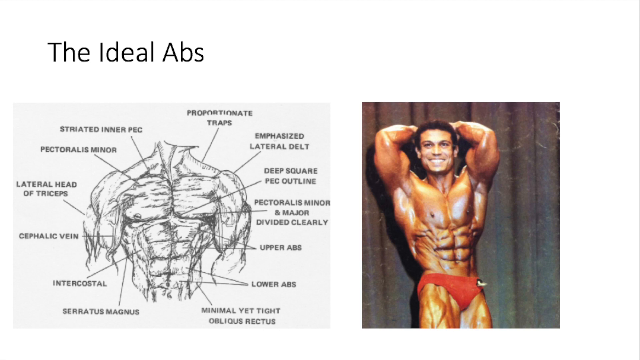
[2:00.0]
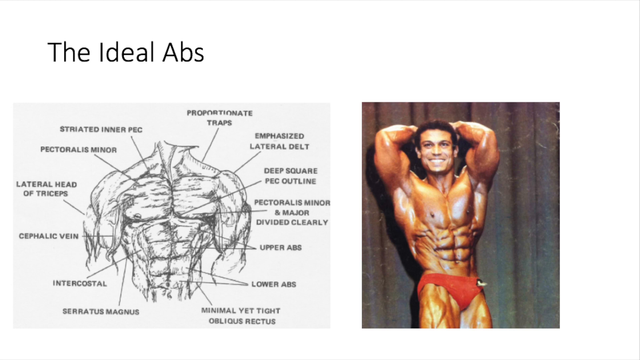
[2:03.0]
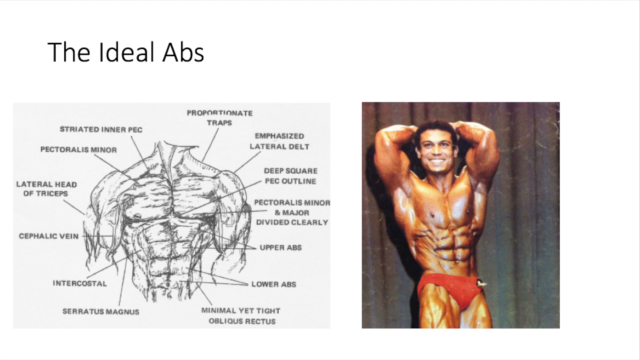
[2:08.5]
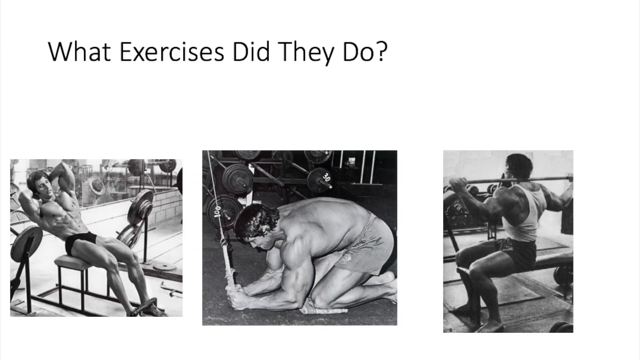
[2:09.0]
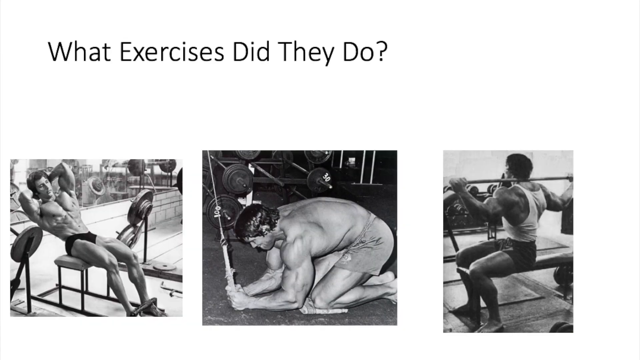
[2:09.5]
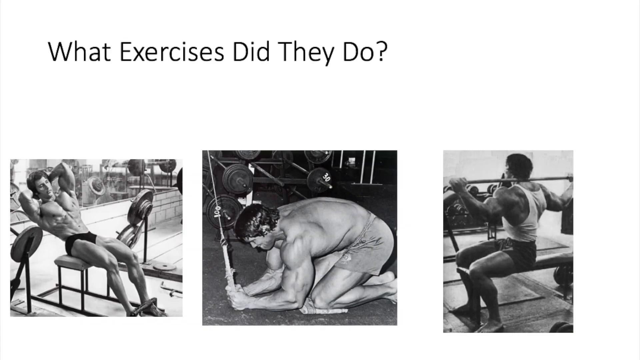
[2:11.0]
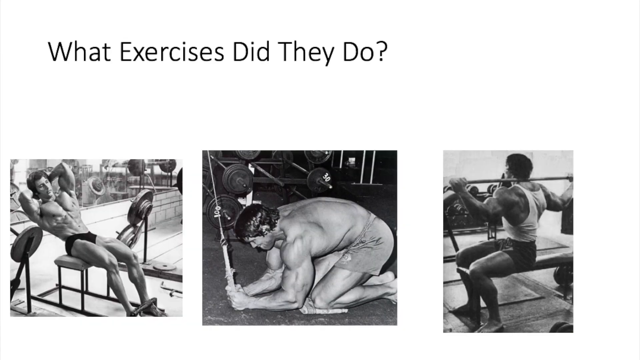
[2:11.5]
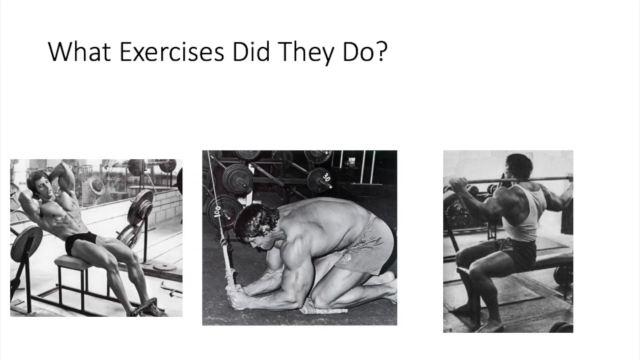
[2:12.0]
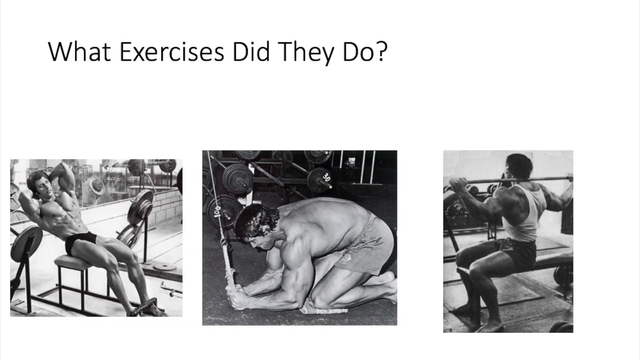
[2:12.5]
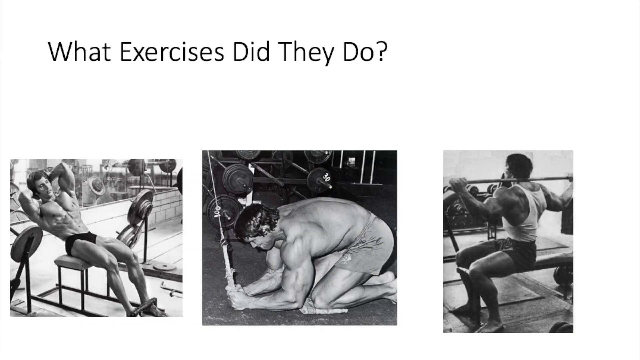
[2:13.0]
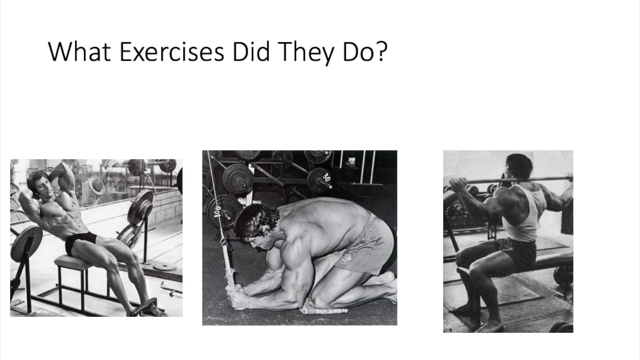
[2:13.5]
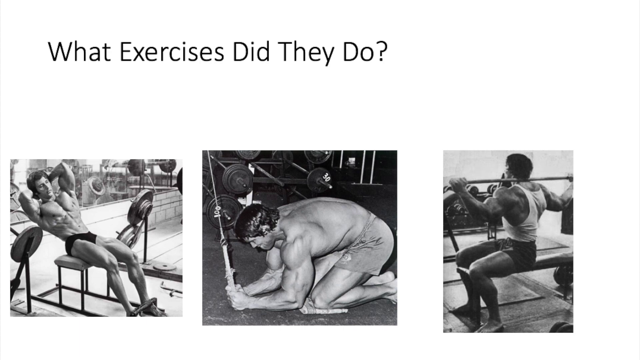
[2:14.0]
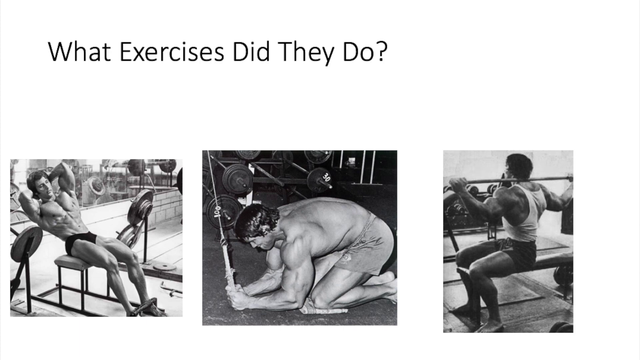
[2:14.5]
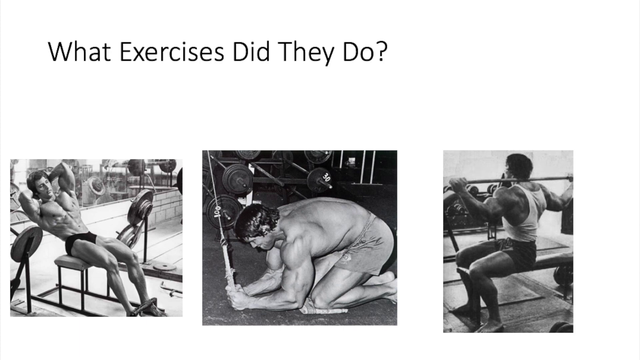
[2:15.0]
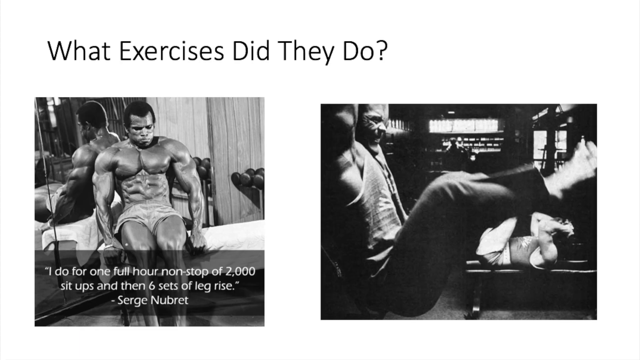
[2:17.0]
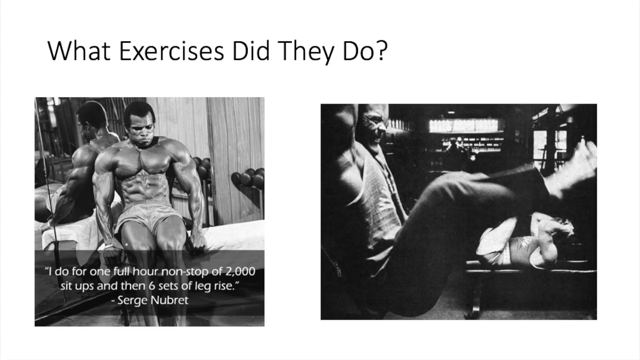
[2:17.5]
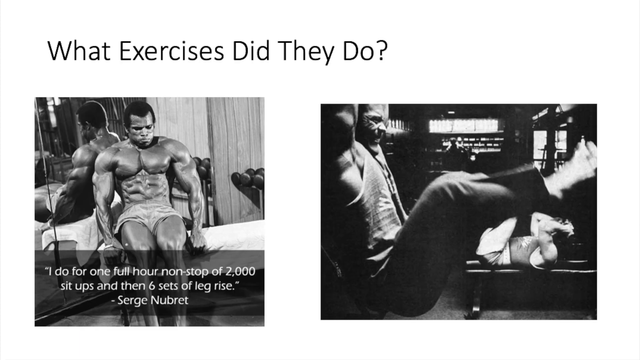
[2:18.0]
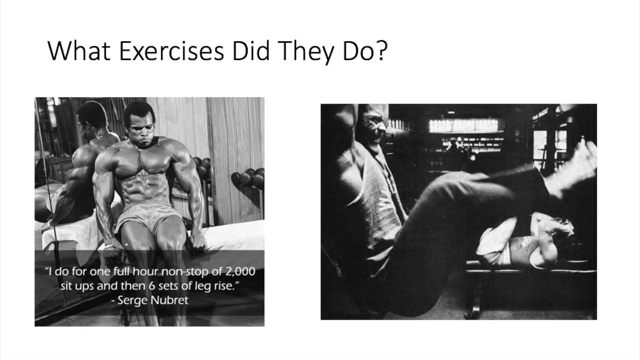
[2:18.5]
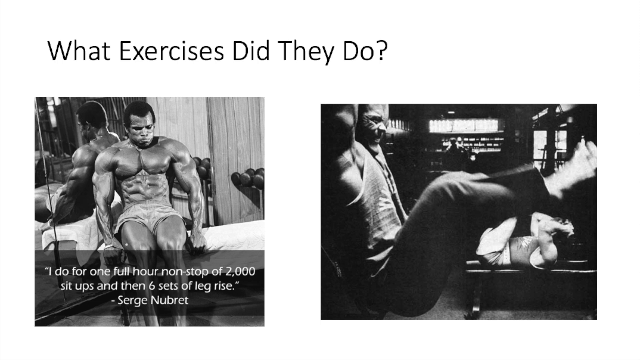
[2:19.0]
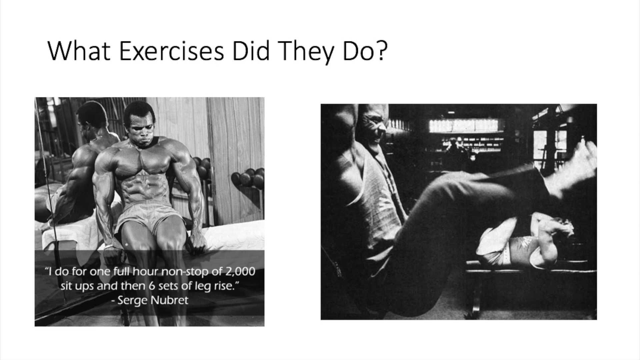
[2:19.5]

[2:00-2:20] The frame is a little wider than it is tall. Black text at the top reads "the ideal abs". In the lower left, a picture extending about halfway across shows something like a pencil sketch of a man's torso with the different muscle groups labeled from the shoulders down to the lower abs. On the right, a heavily tanned man in red trunks poses with his hands behind his head and his elbows up at head level, a pose that shows off the abs; he smiles and faces generally toward the camera. The next slide has black text at the top reading "what exercises did they do". In the lower left, a man in black trunks is on the edge of a bench, leaning back with his hands behind his head, as if descending into or coming up from some sort of crunch. In the middle is Arnold, who looks like he is doing a cable crunch: facing left at a cable machine with the cable between his hands, crunching down. On the right, a black man twists toward the right with a barbell on his back.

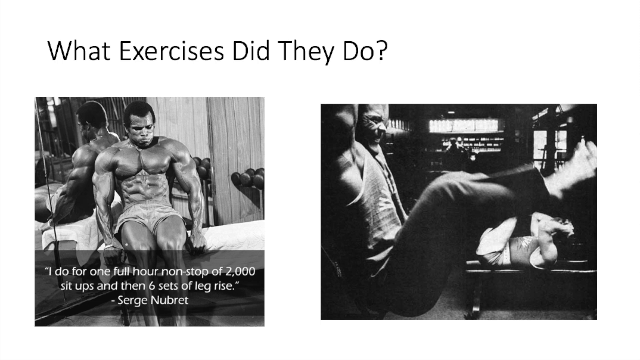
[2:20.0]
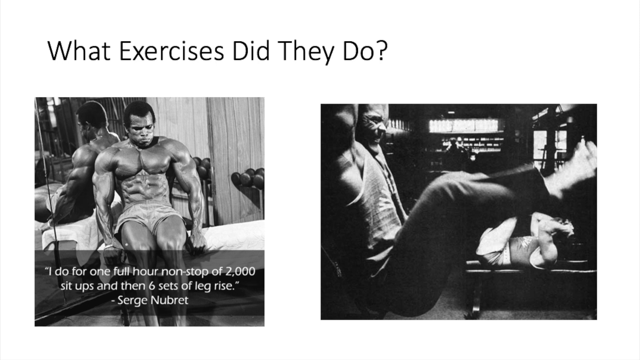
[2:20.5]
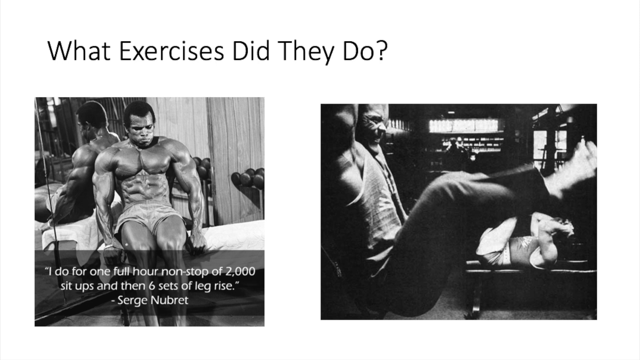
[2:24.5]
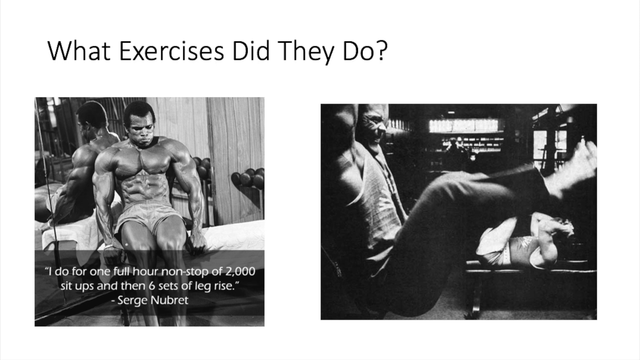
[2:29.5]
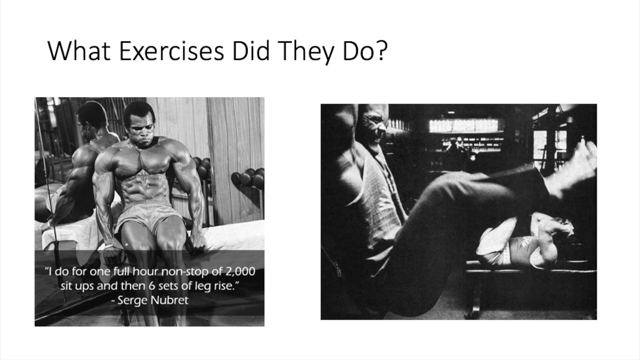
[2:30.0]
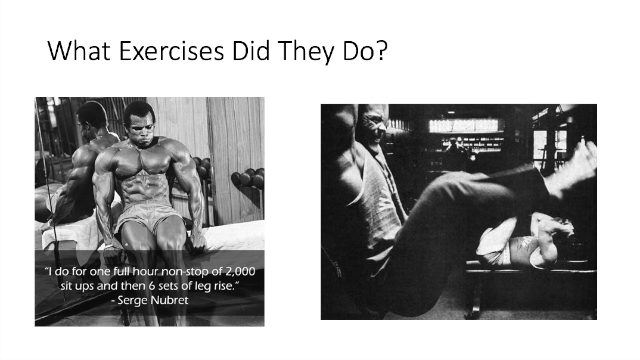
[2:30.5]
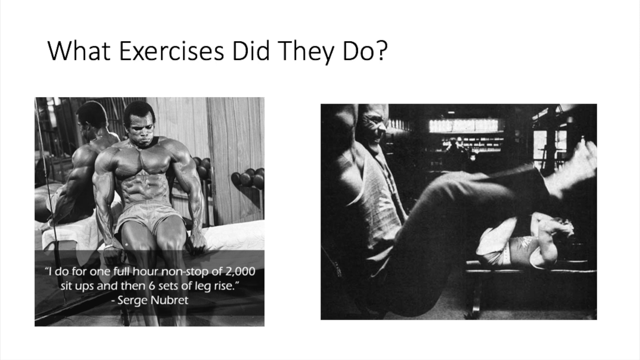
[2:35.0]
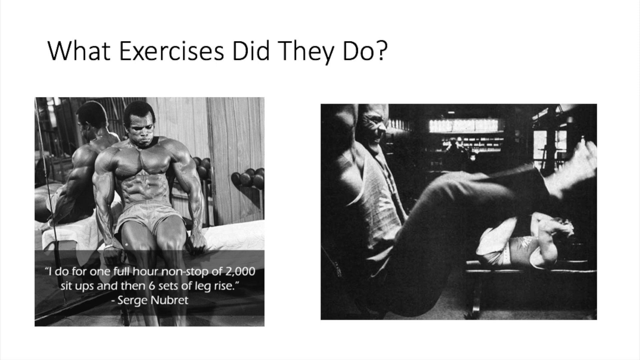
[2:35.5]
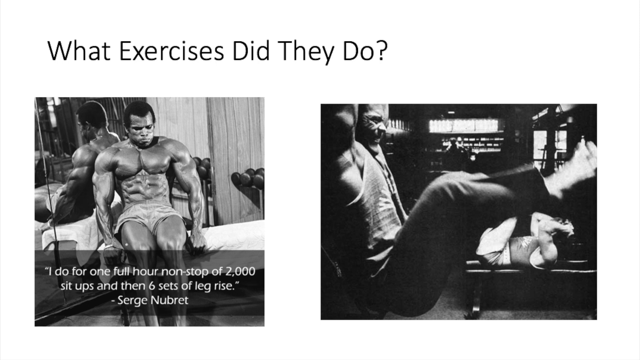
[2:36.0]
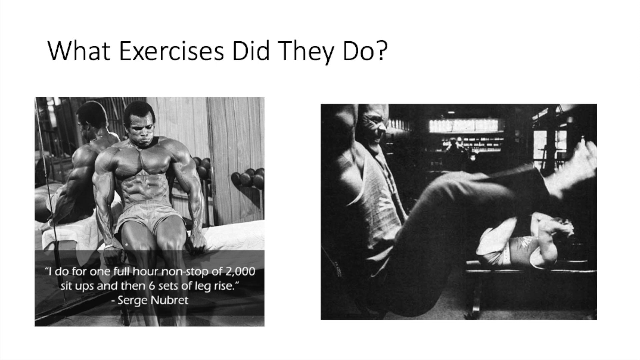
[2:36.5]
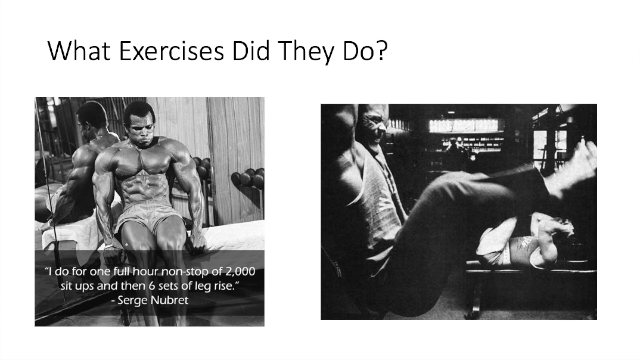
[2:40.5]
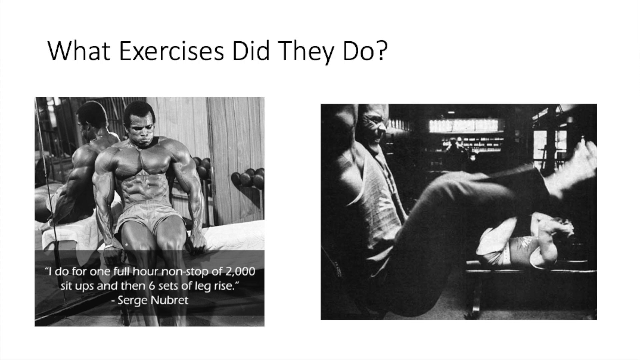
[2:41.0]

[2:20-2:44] The frame is a little wider than it is tall. Text at the top left reads "what exercises did they do". Below it on the left, in black and white, a heavily enhanced black man with very large muscle groups sits wearing only shorts, and the mirror behind him kind of shows his shoulders and rear delt. Below him, quoted text reads "i do for one full hour non-stop of 2 000 sit-ups and then six sets of leg rise", attributed to "surge nubret". To the right, a man facing right looks like he is doing crunches, with another person in the distance doing crunches in the opposite direction. Both pictures are black and white, and the right one is slightly wider than the left. In the right picture, dumbbells are racked on the right-hand side of the image behind the individual, who is sitting on what appears to be some sort of item with a white cloth on it, perhaps a towel, and a window is open in the upper right-hand corner.